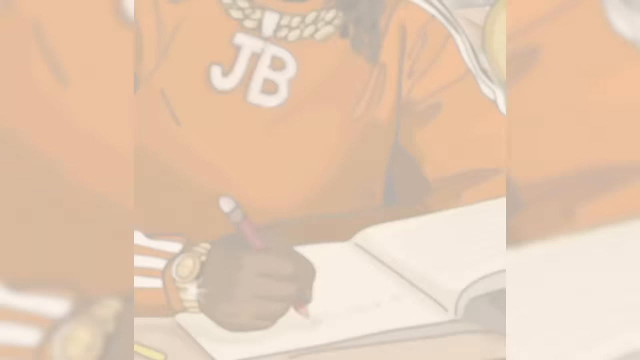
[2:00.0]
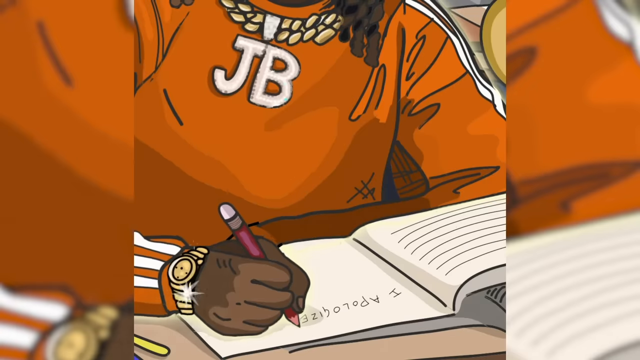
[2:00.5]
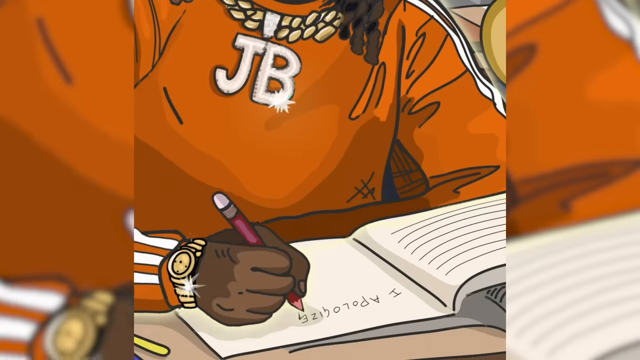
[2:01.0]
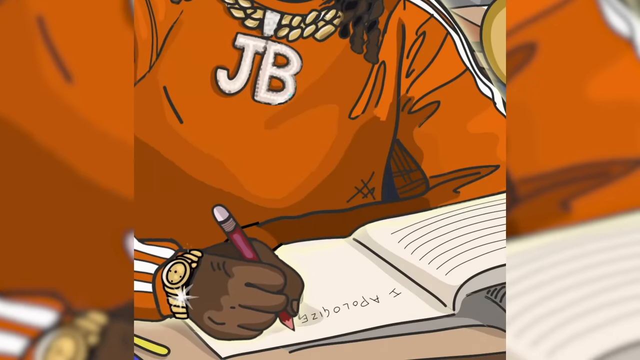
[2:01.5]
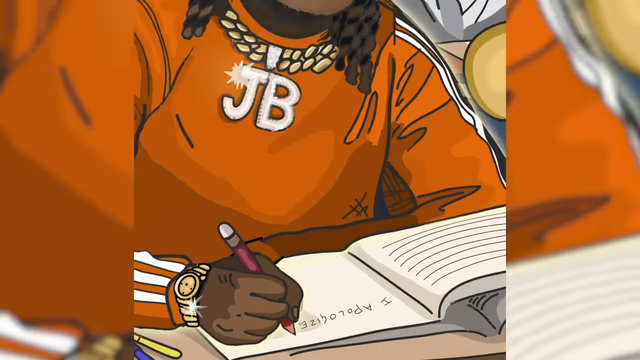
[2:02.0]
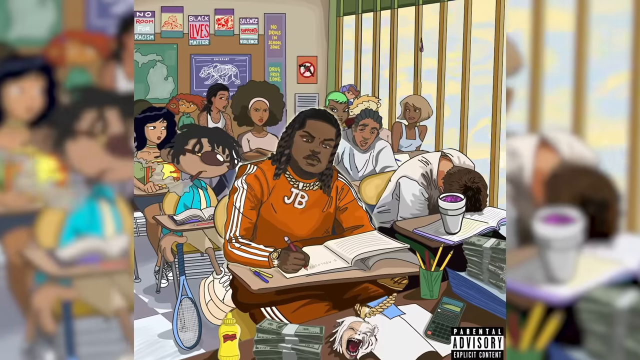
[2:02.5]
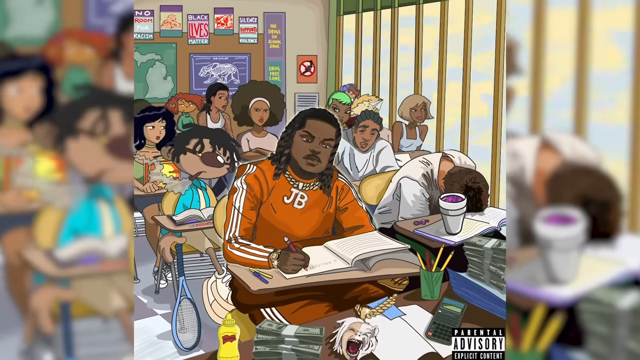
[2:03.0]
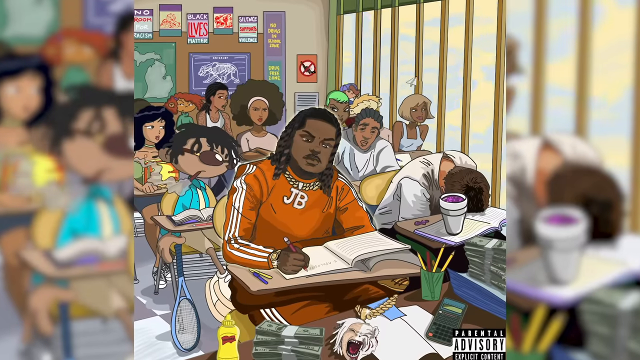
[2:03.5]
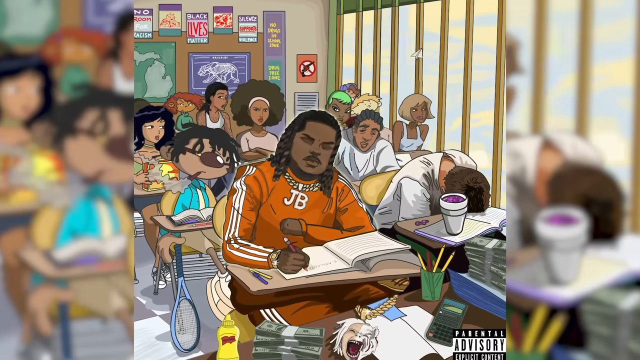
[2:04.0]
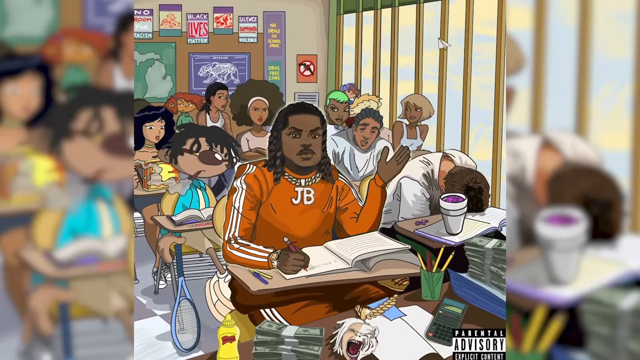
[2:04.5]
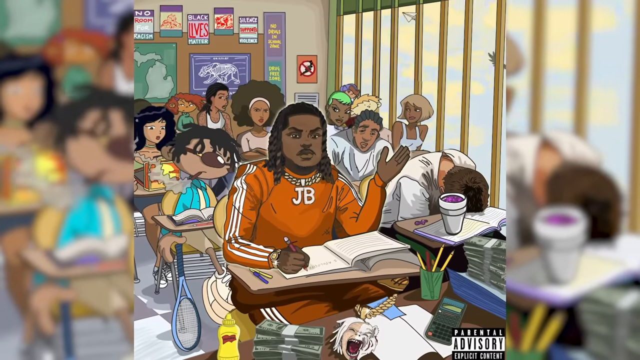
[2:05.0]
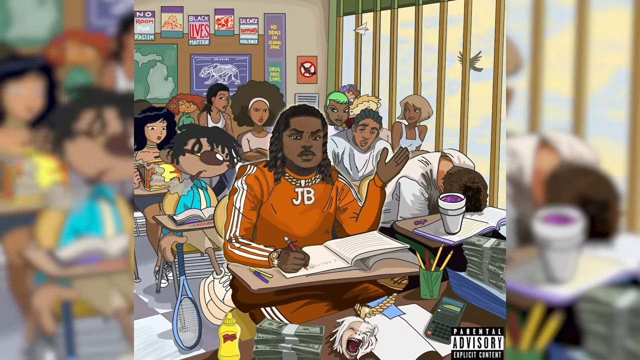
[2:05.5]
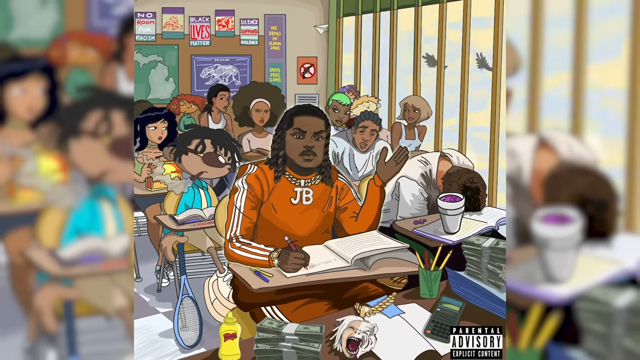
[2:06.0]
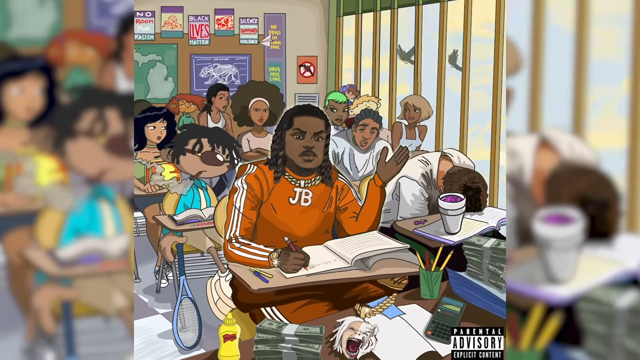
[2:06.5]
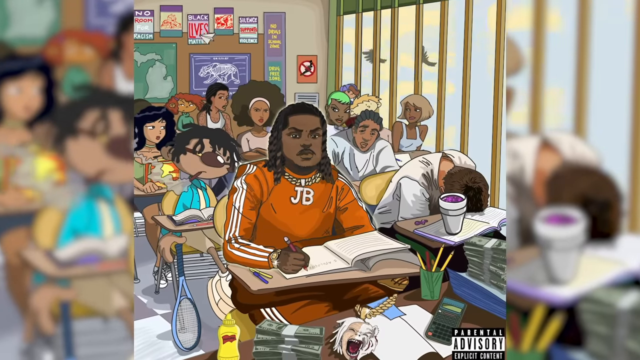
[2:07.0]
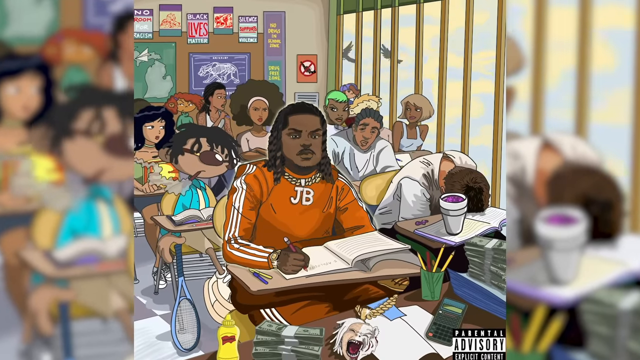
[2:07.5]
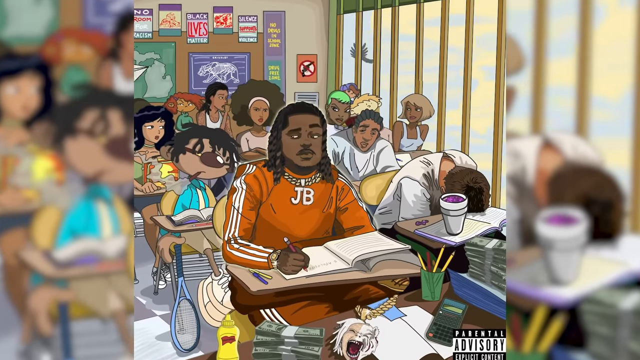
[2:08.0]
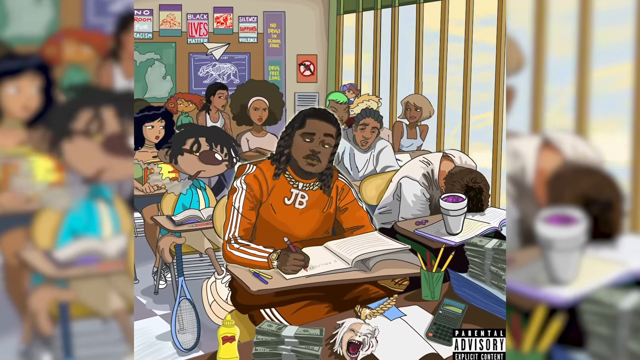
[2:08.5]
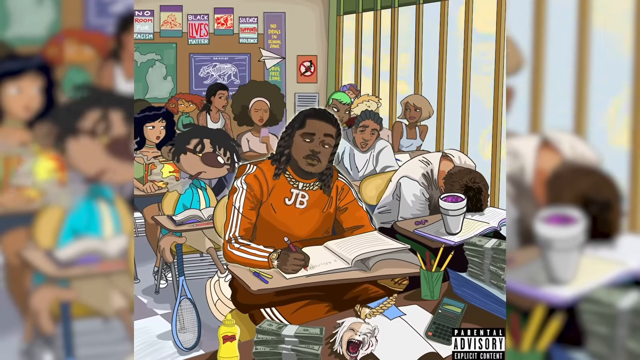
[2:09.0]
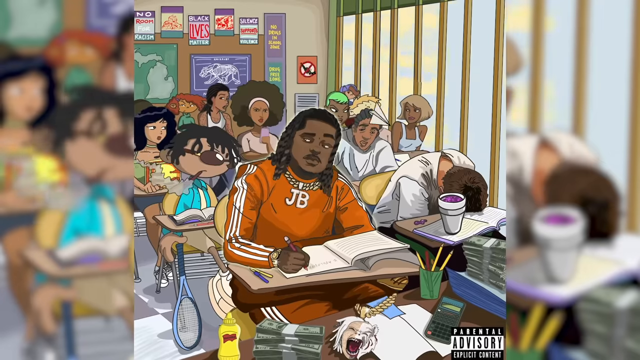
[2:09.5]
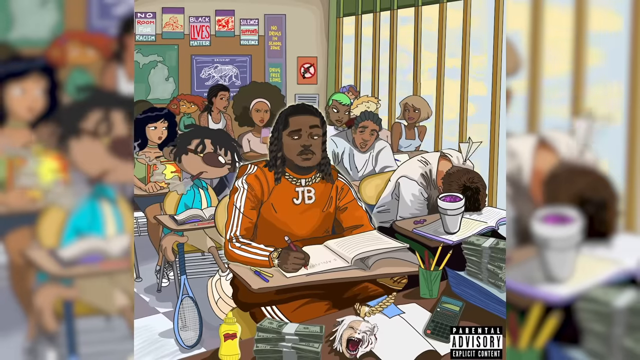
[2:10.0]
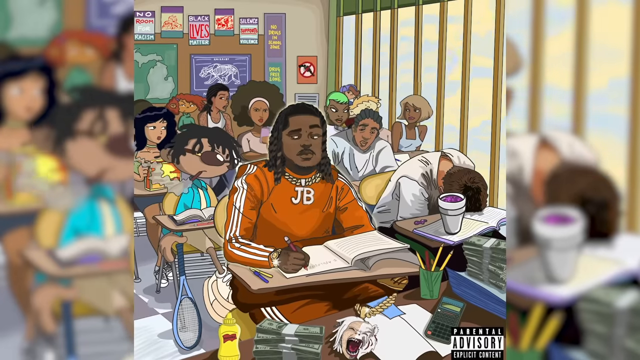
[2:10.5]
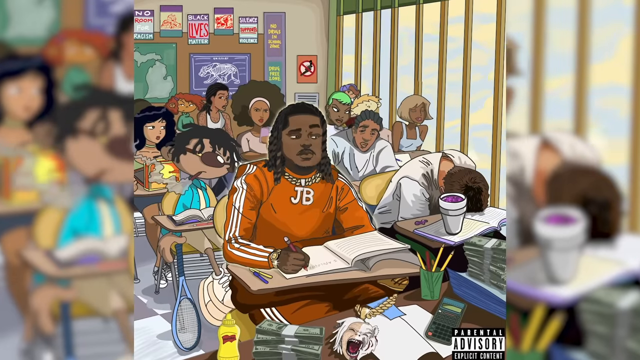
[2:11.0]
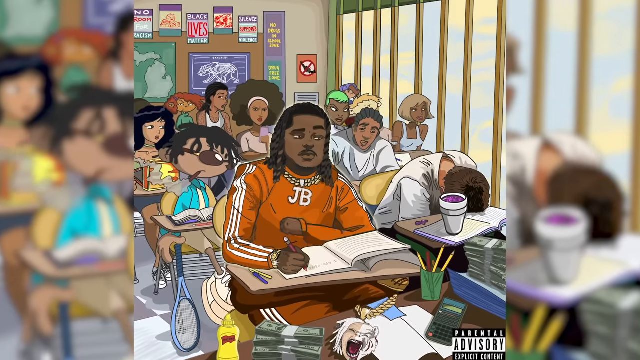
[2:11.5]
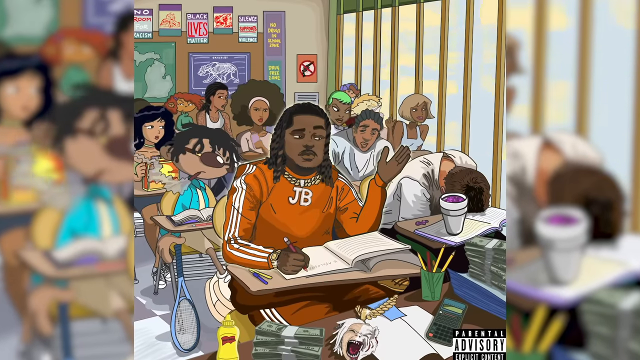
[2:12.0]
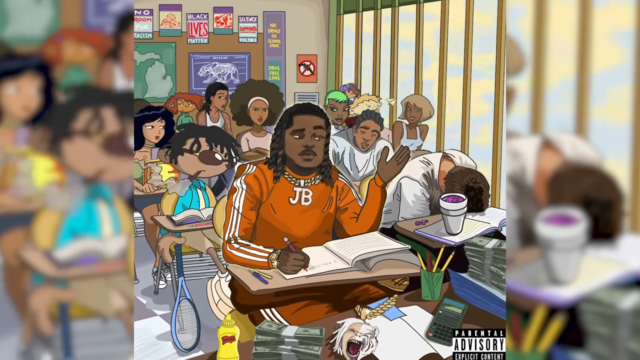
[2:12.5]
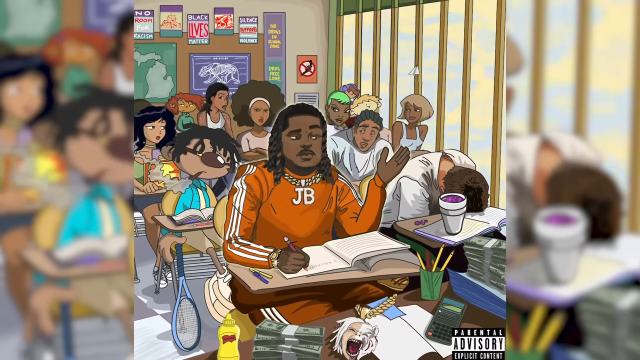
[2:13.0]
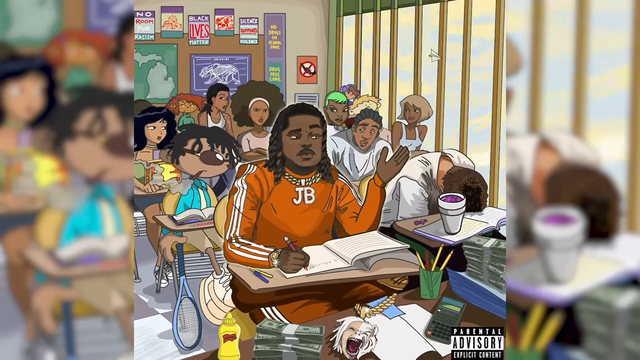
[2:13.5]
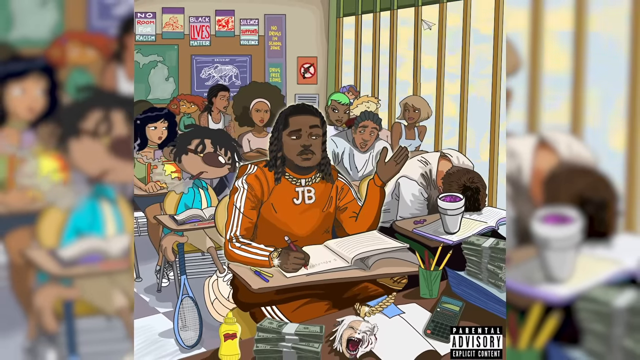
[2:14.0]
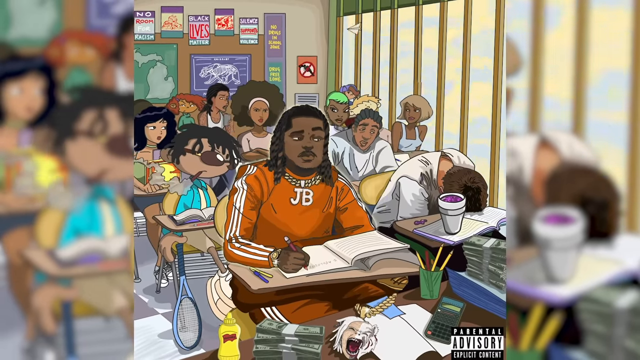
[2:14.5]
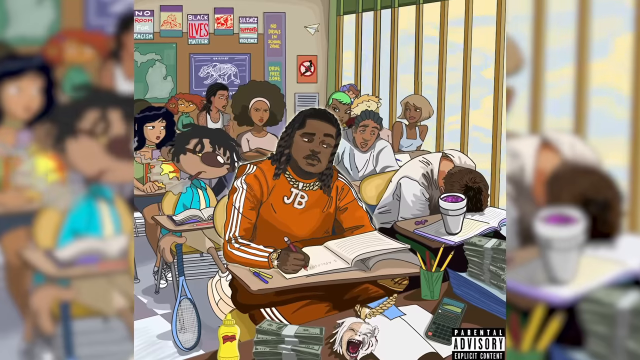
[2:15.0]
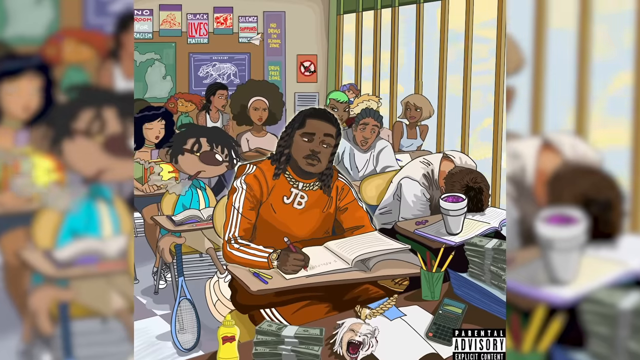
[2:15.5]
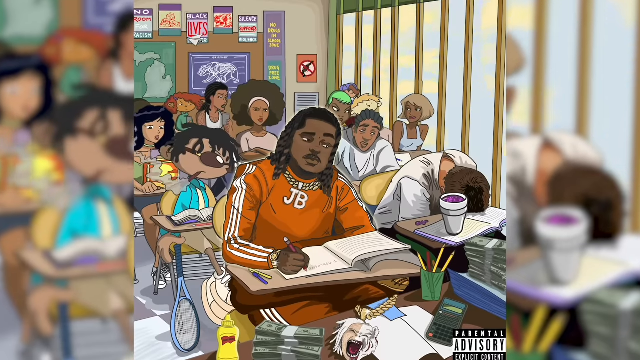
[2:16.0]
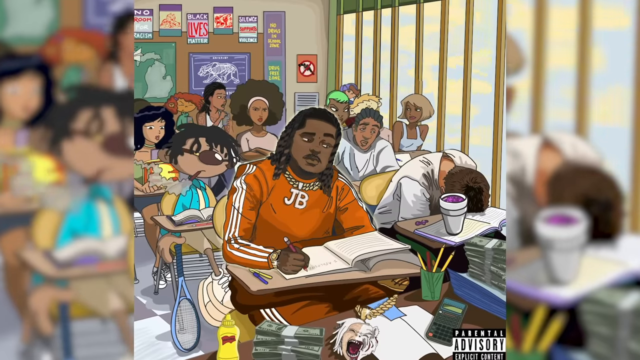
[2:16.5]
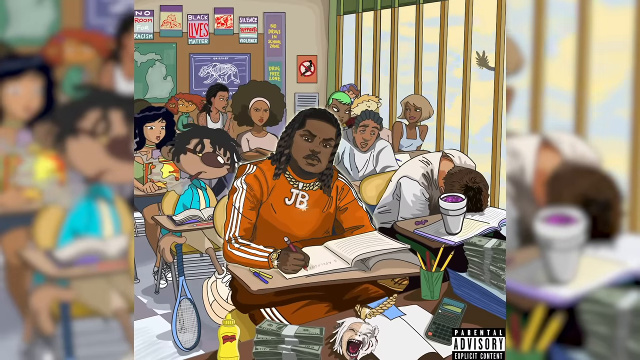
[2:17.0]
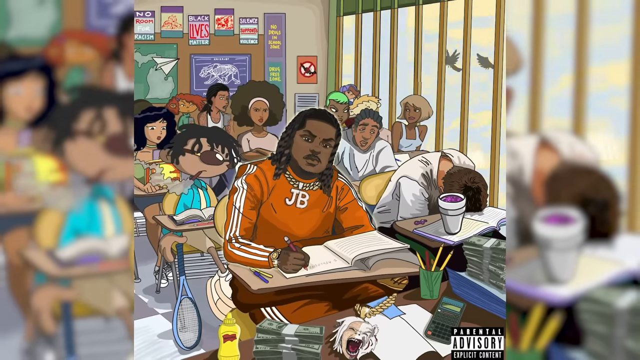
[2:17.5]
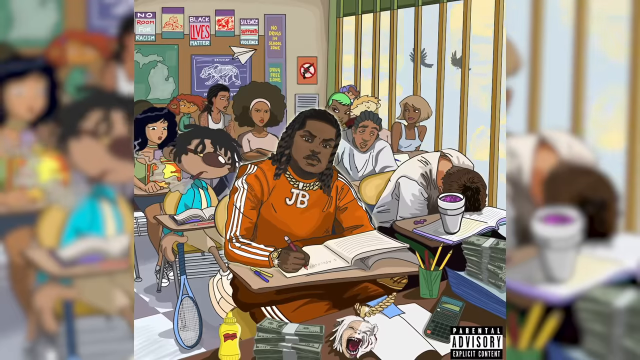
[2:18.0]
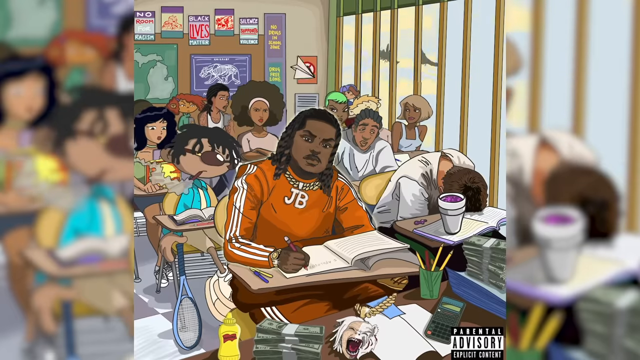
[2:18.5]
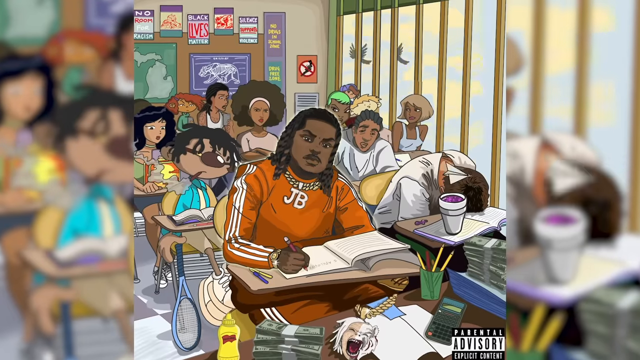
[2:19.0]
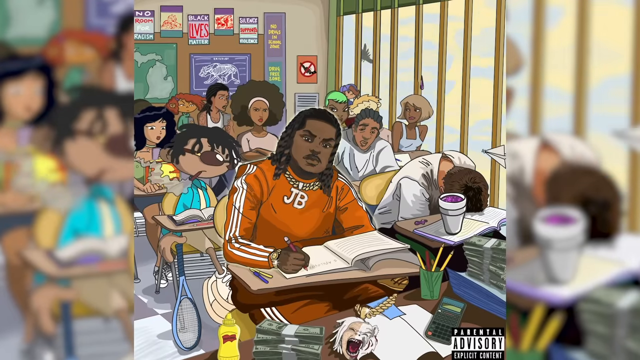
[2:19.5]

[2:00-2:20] JB writes "I apologize", throws his hand up for a bit and puts it back in his lap, looks around the room from left to right, and raises and lowers his hand again. The others are still looking ahead, nodding, smoking, looking at each other or sleeping. In the back sits a person with a ponytail in a sleeveless shirt whose body looks like it could be a man's, though the face is very soft and feminine; they sit doing nothing and possibly cough briefly. Next to them on the left is what looks like a small child, maybe around 11, with a mischievous look on his face.